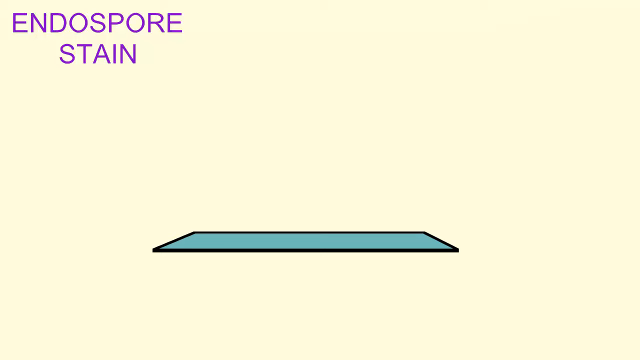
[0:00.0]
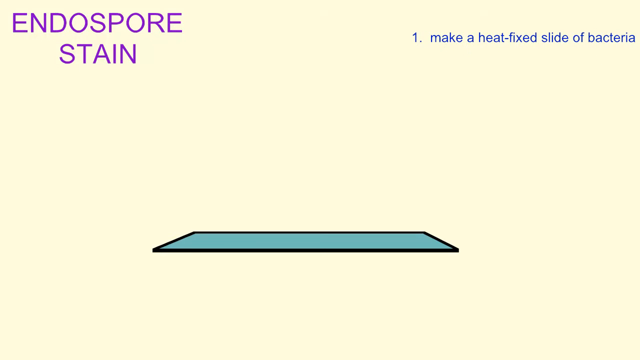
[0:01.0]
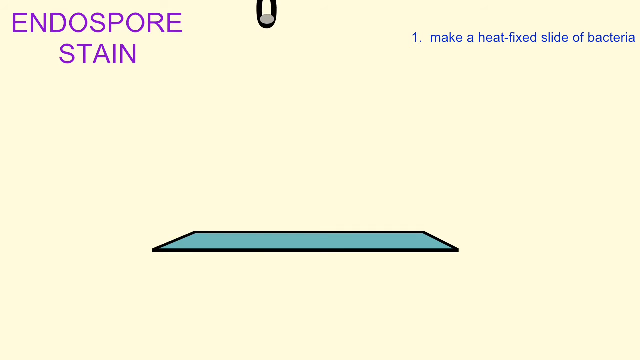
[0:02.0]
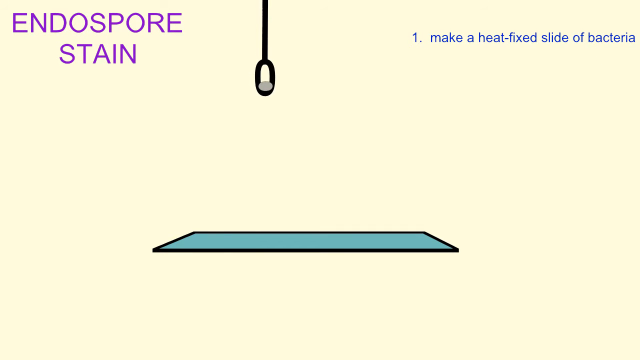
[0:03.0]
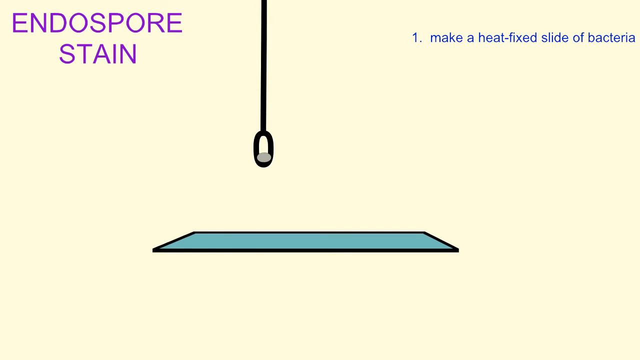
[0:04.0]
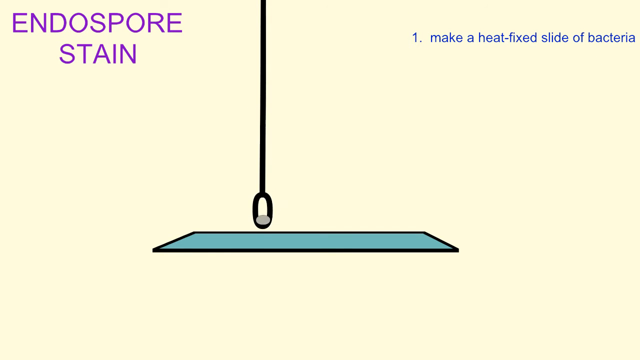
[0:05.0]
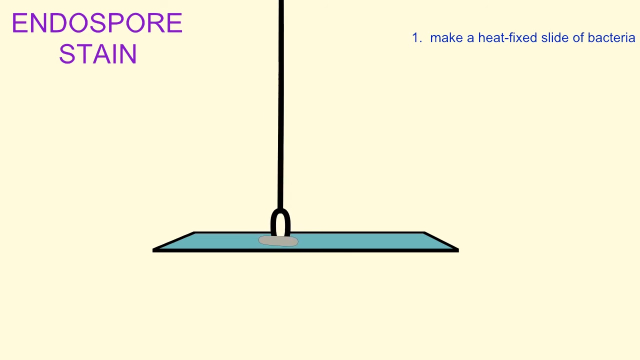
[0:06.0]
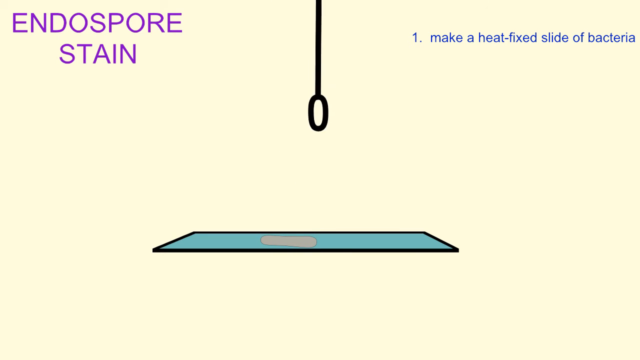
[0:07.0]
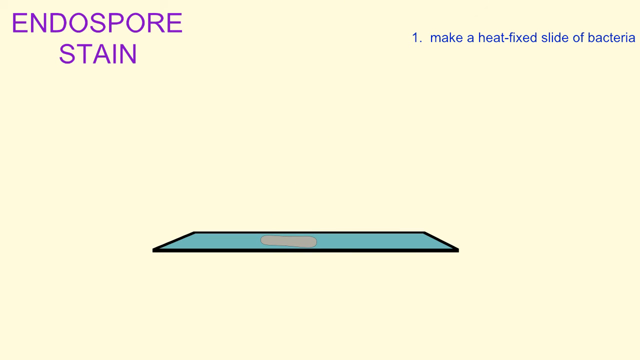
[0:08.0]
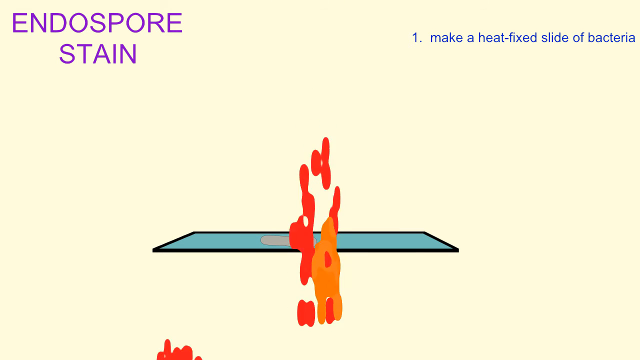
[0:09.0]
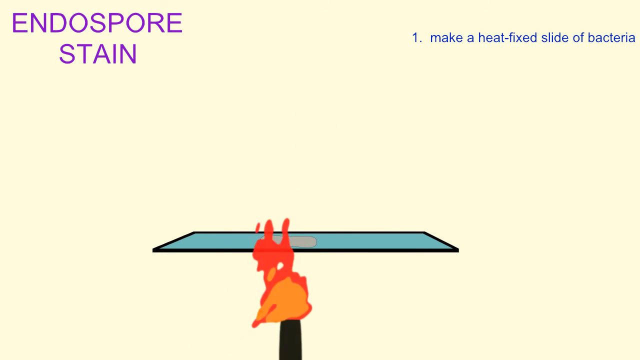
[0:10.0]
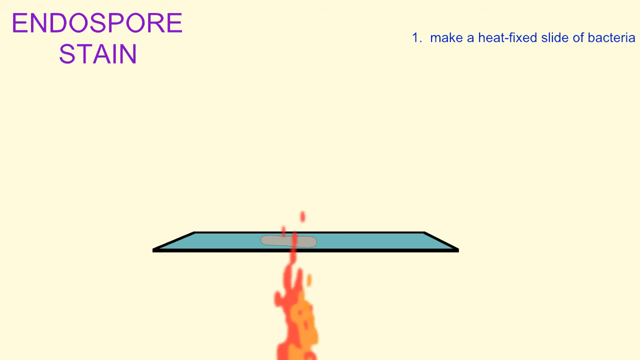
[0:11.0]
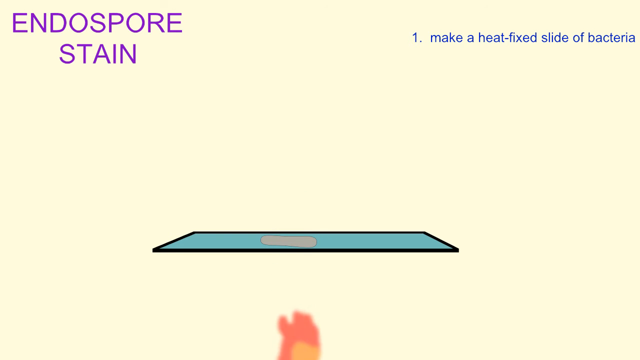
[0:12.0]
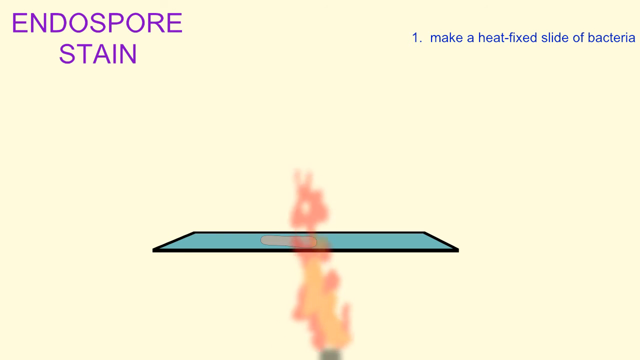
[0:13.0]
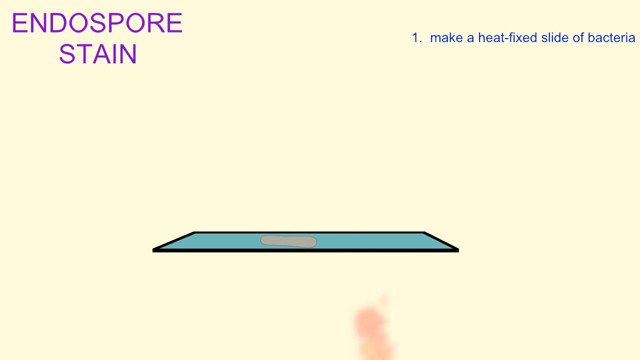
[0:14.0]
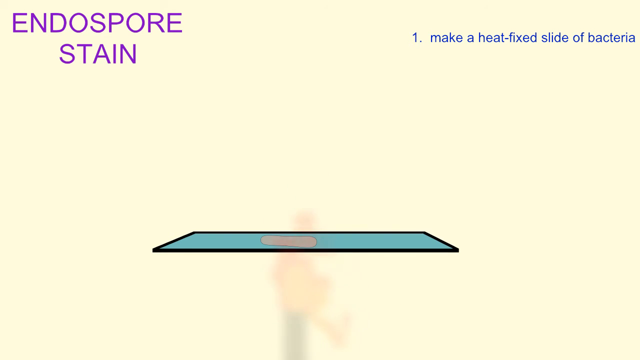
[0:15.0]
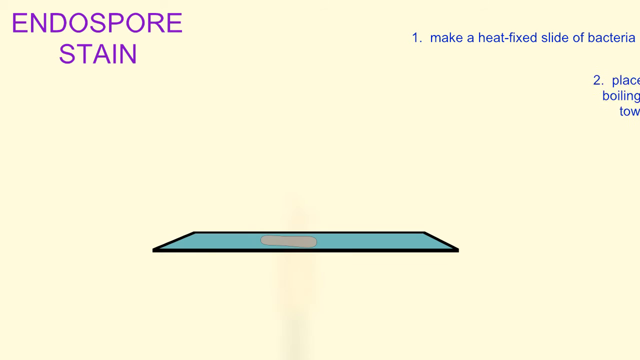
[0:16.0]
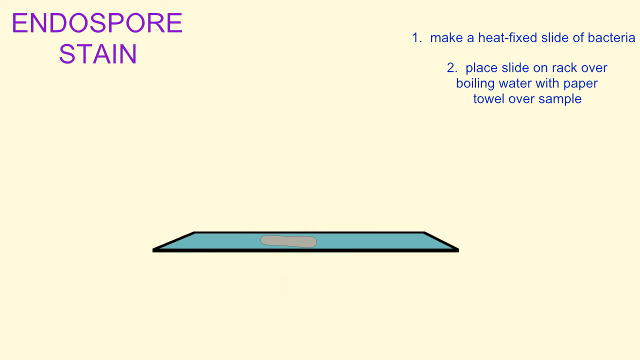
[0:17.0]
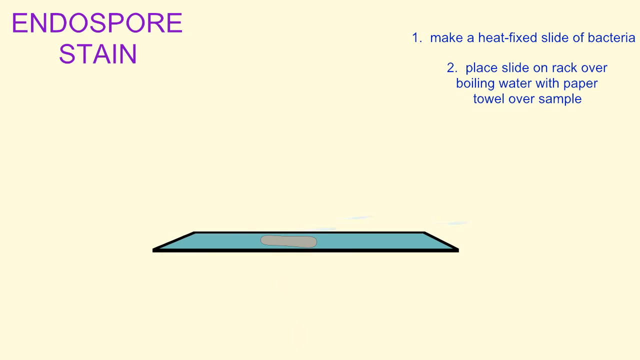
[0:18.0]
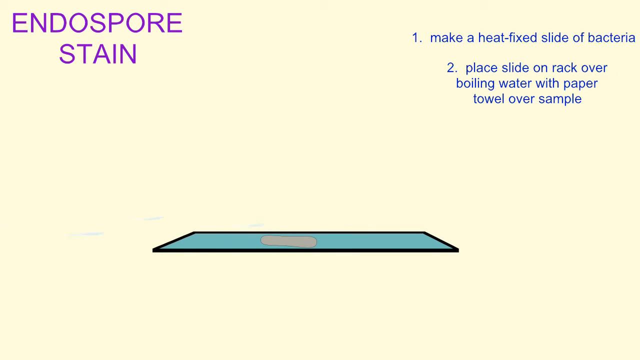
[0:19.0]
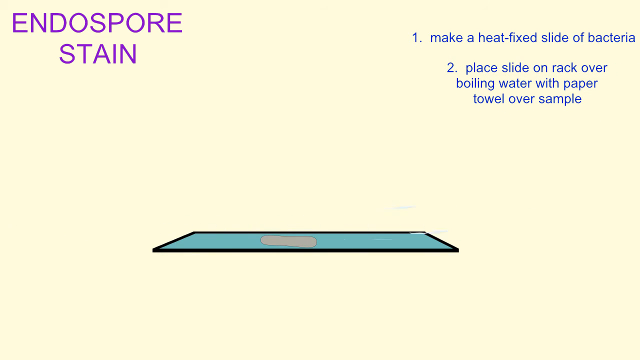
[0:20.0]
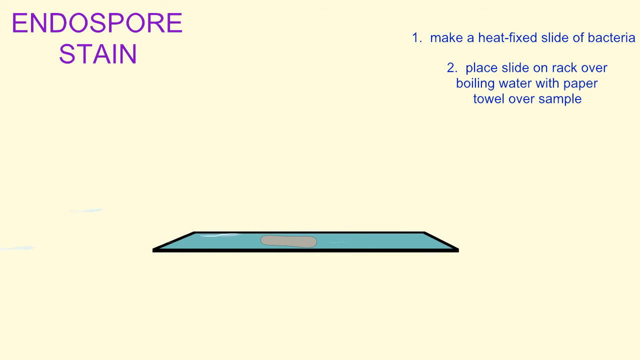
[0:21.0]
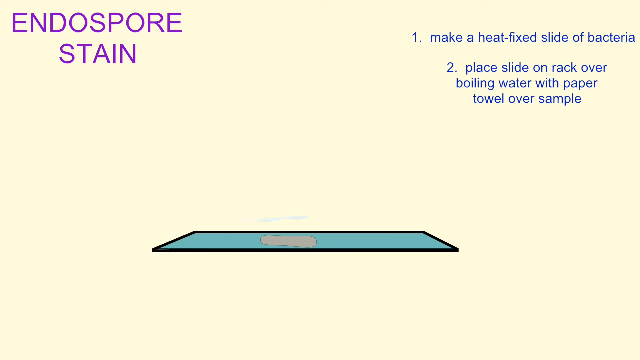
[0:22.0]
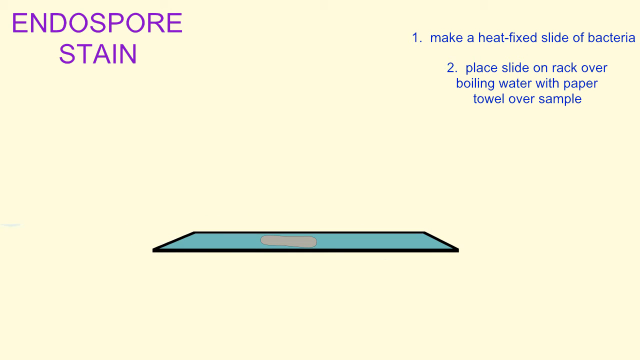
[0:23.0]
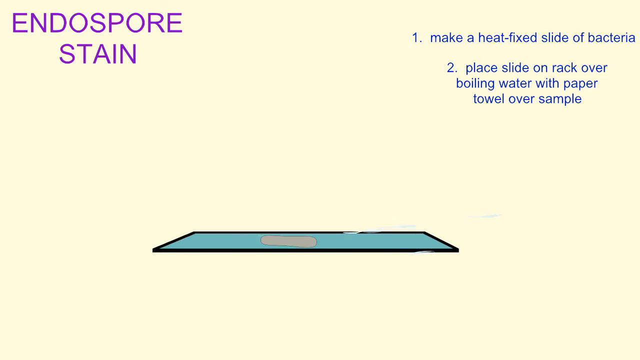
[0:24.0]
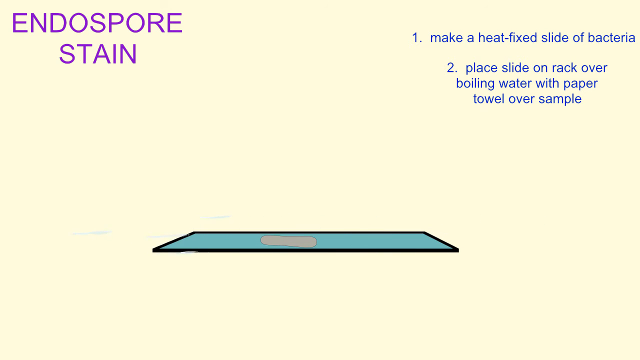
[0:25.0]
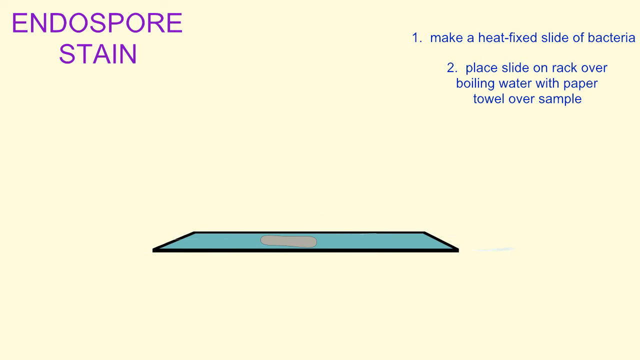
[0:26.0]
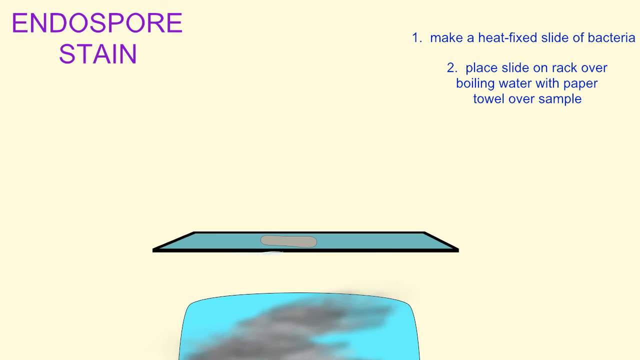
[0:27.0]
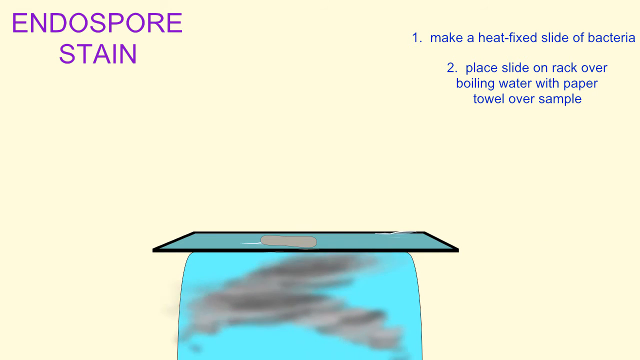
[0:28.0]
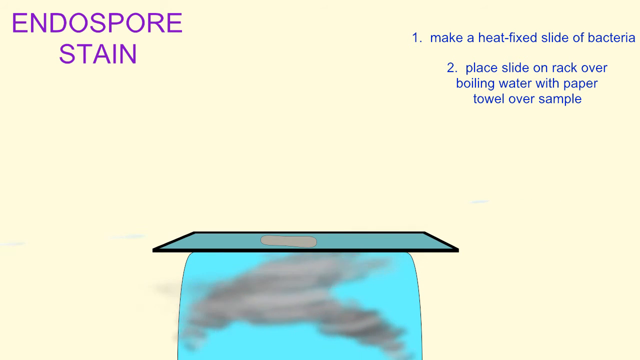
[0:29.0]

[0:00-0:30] A slide reads "endospore stain" in purple on the upper left. On the right, in blue, a number one appears with the text "make a heat fixed slide of bacteria." There appears to be some sort of green rectangle at the bottom middle of the slide, and a long black stick comes out of the top. The stick has a circular oval hook at the bottom with something inside it. It places a gray object onto the mat, and fire of orange and red appears from the bottom. A number two then appears on the right with the text "place slide on rack over boiling water with paper towel over the sample." The view shows the green slide with the gray object on it as smoke appears from the bottom of the slide; the smoke is dark to medium gray against a teal background.